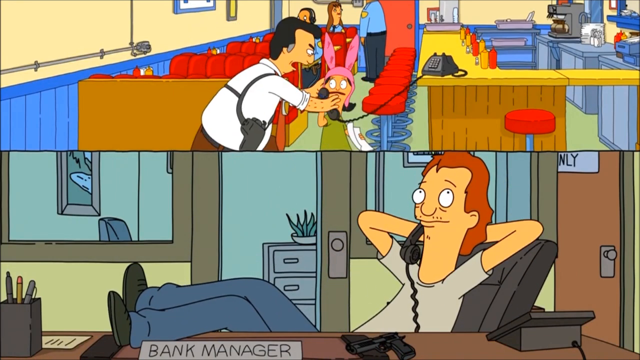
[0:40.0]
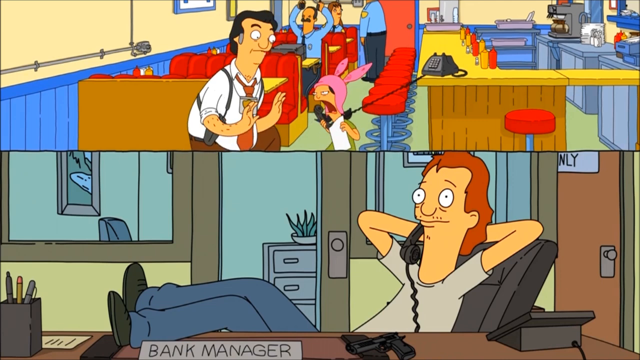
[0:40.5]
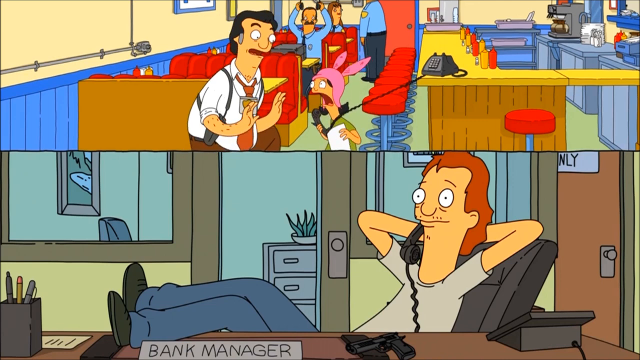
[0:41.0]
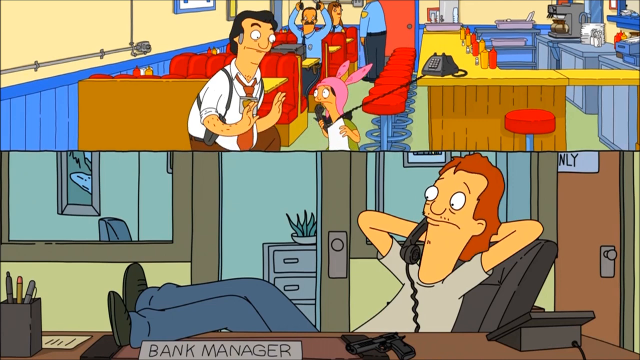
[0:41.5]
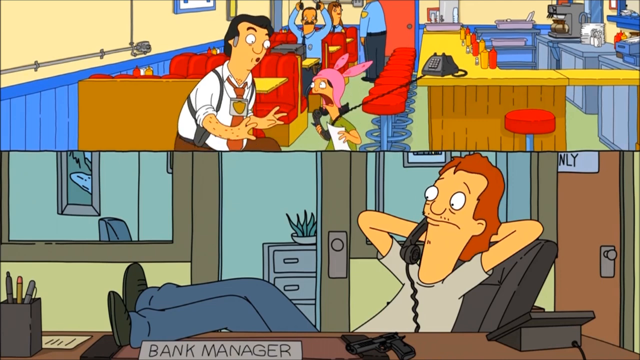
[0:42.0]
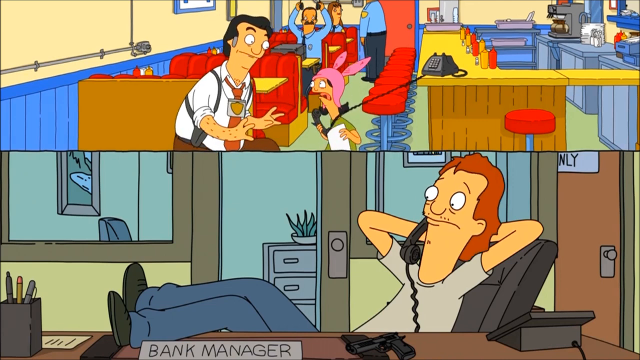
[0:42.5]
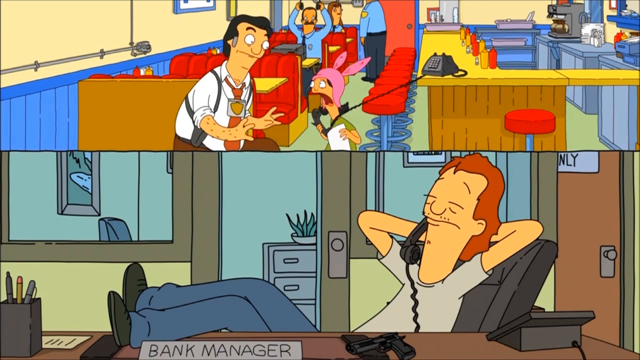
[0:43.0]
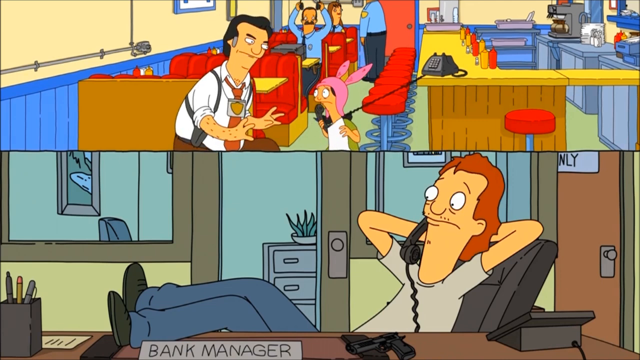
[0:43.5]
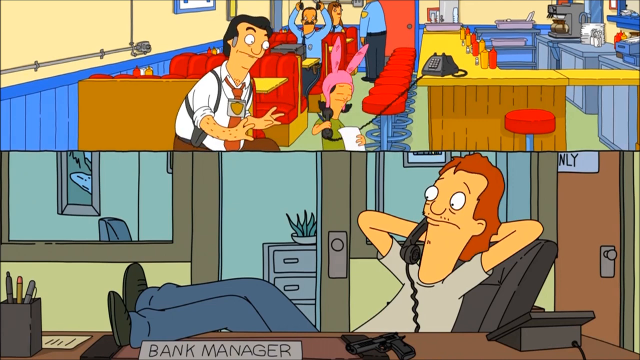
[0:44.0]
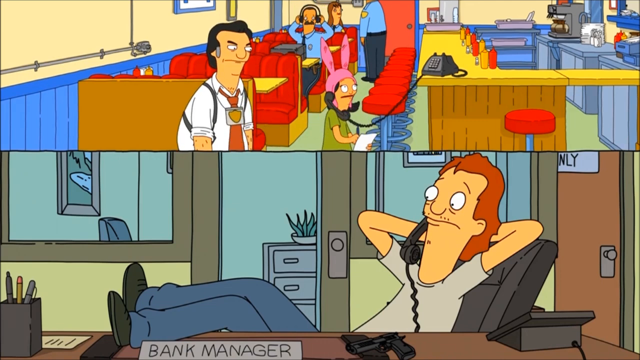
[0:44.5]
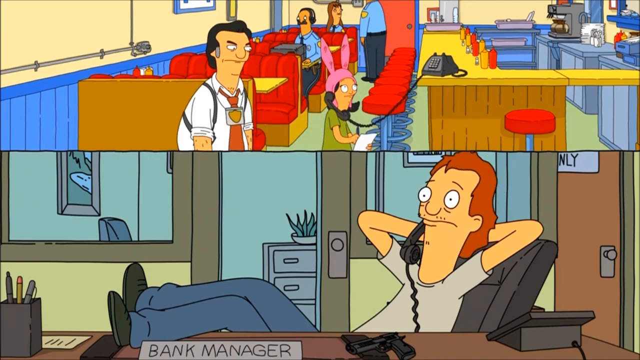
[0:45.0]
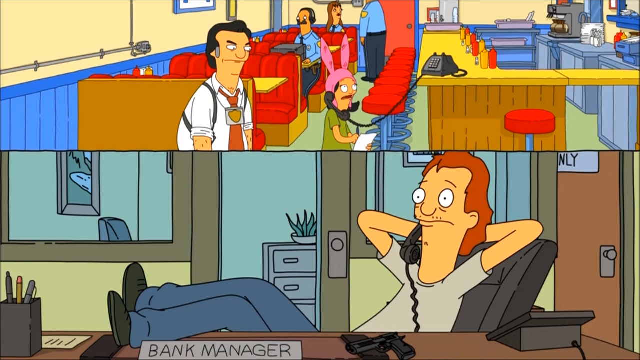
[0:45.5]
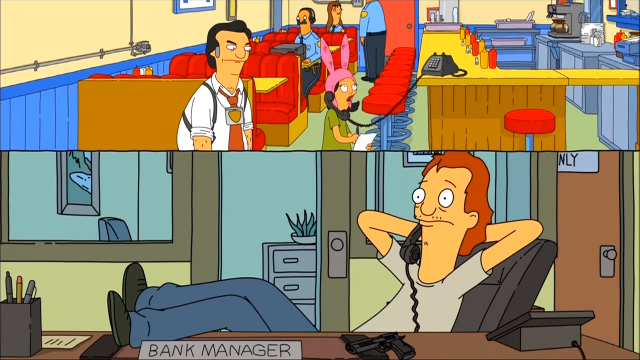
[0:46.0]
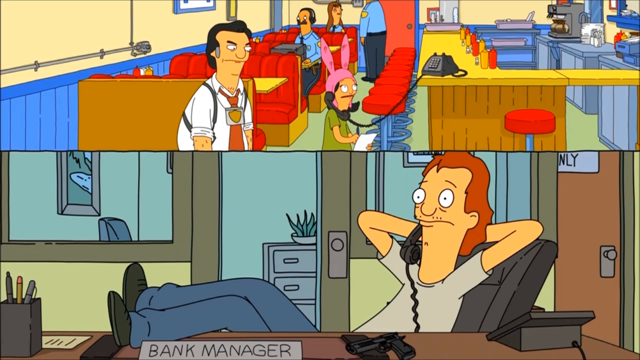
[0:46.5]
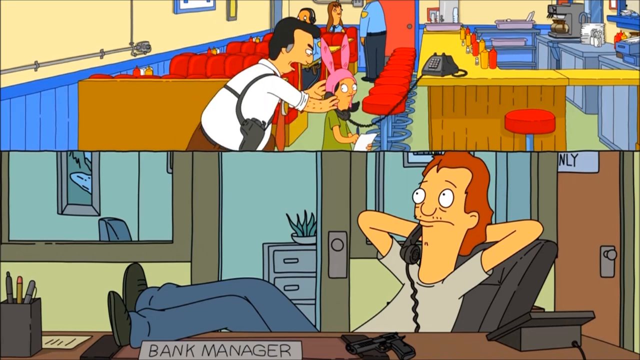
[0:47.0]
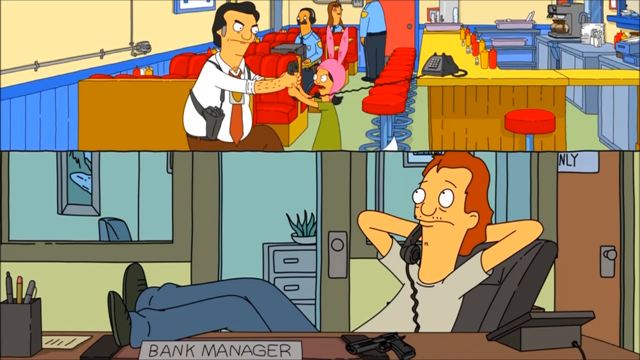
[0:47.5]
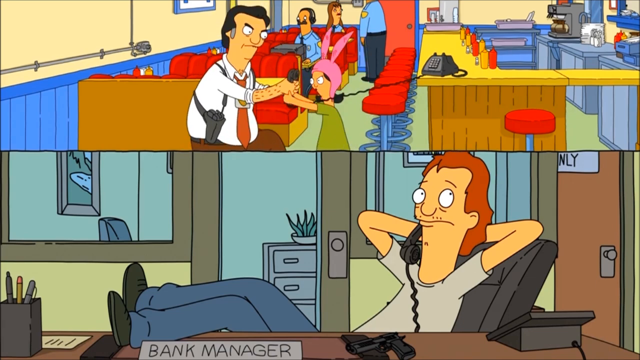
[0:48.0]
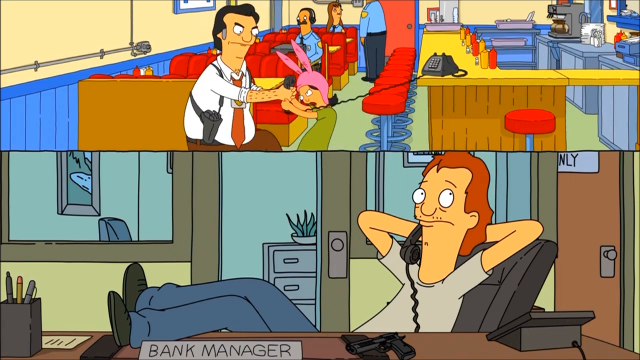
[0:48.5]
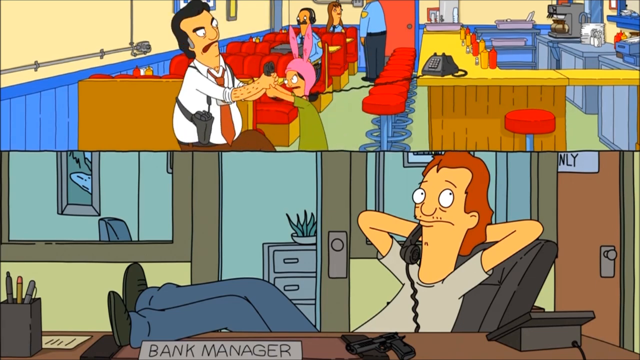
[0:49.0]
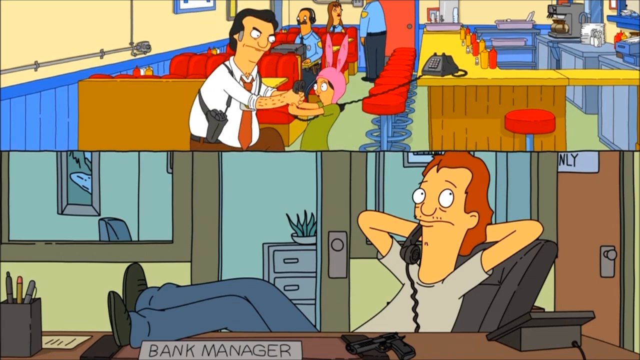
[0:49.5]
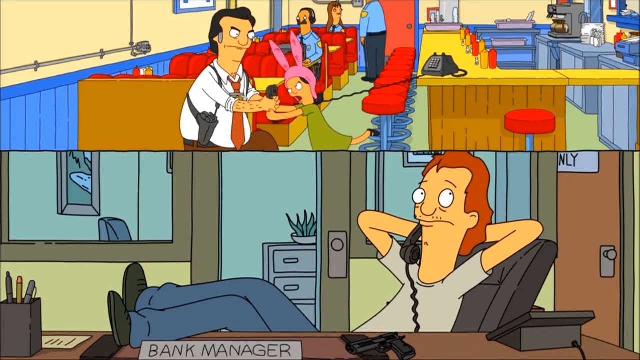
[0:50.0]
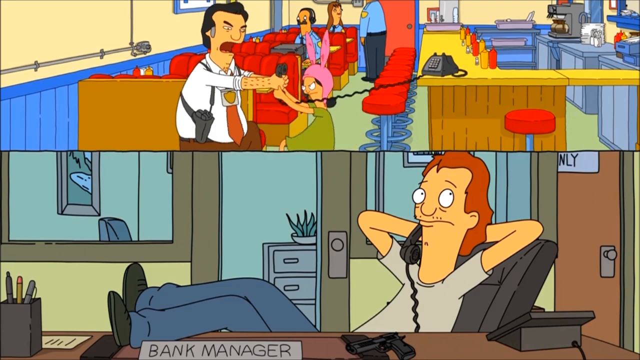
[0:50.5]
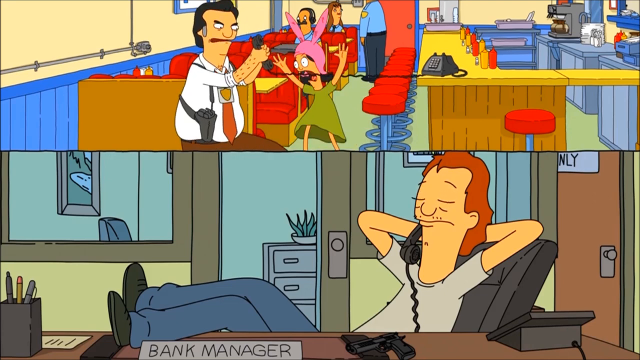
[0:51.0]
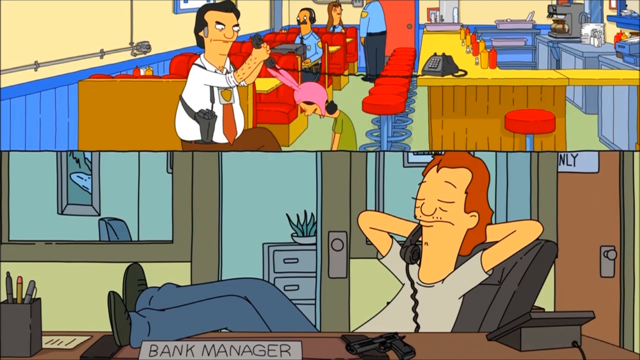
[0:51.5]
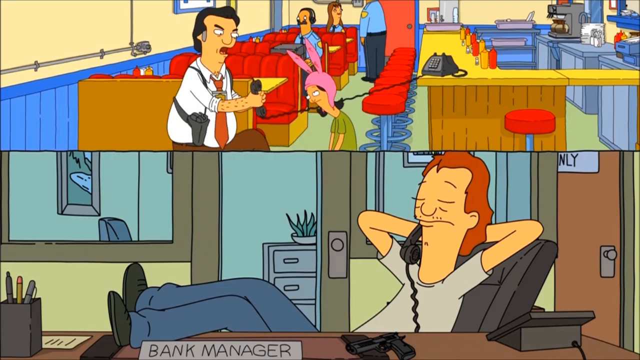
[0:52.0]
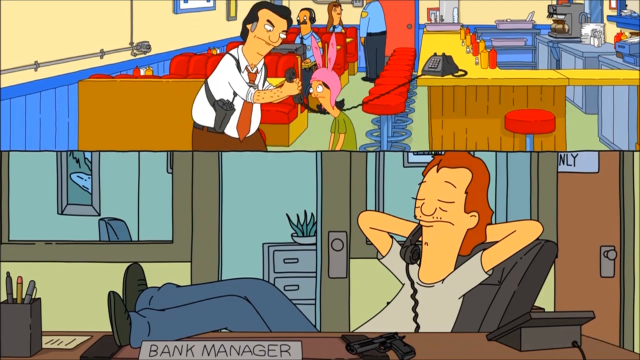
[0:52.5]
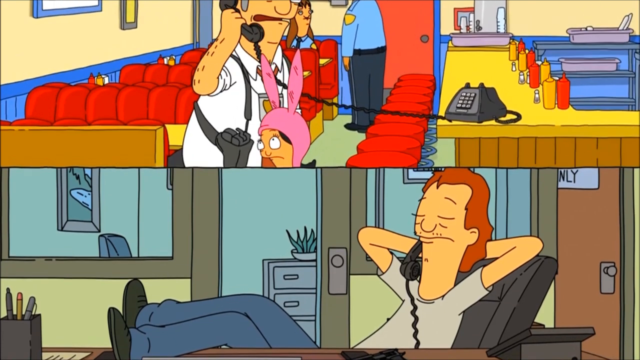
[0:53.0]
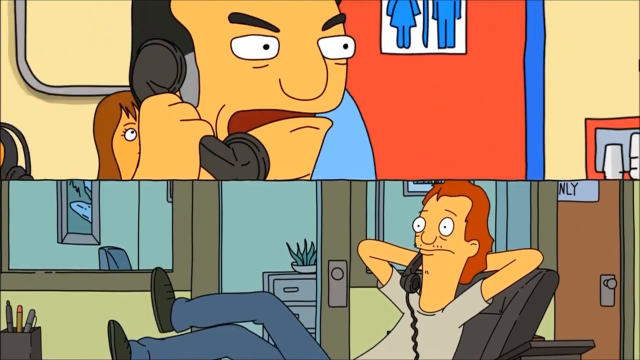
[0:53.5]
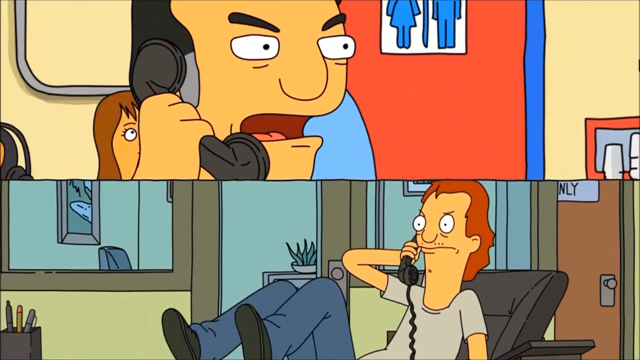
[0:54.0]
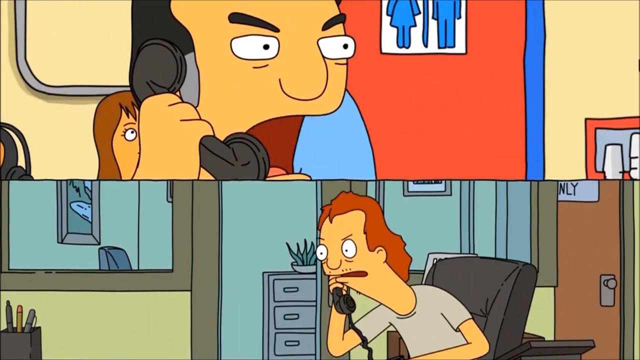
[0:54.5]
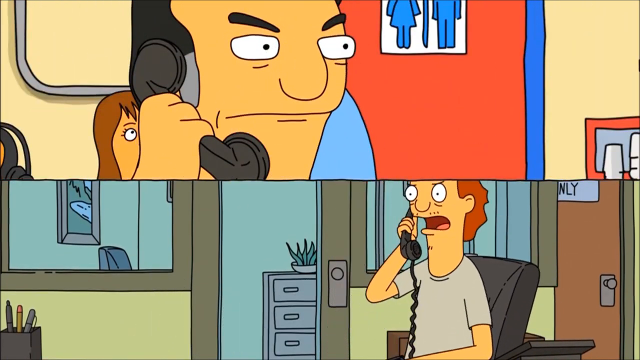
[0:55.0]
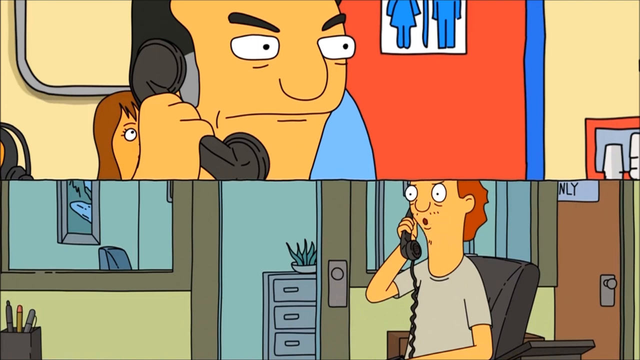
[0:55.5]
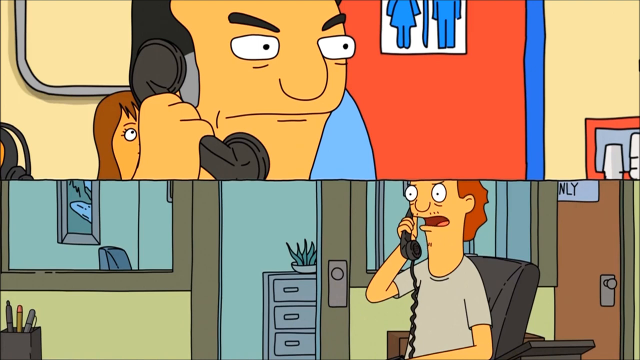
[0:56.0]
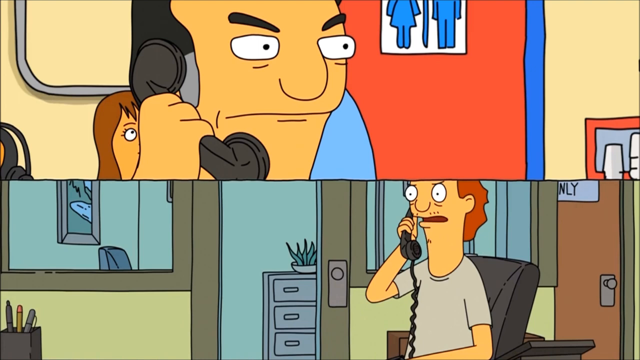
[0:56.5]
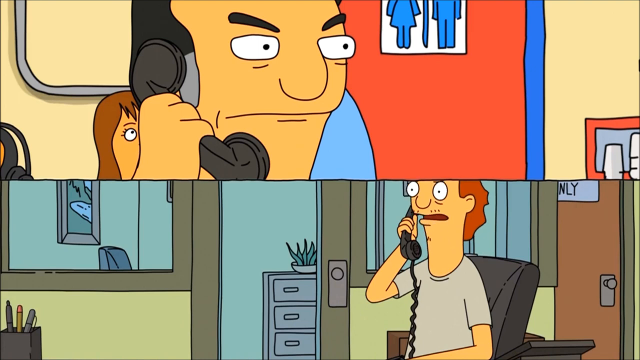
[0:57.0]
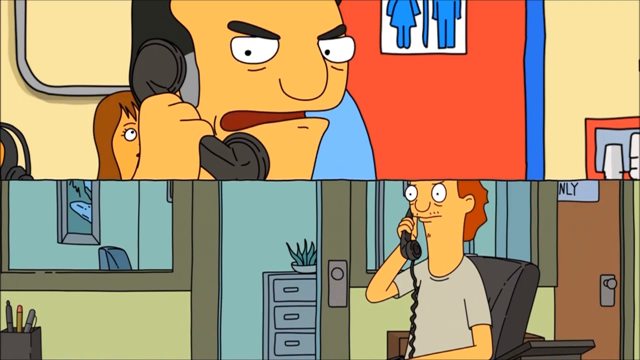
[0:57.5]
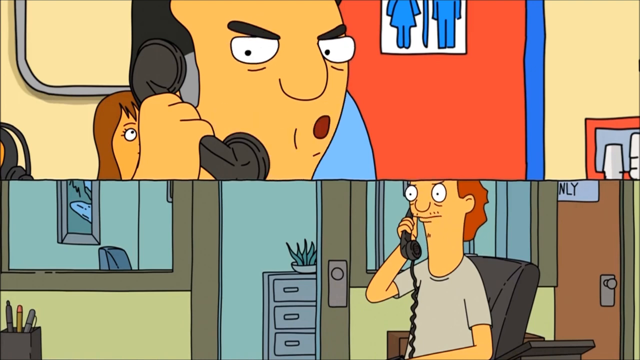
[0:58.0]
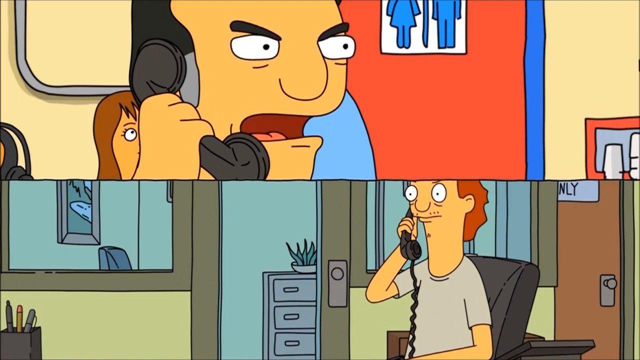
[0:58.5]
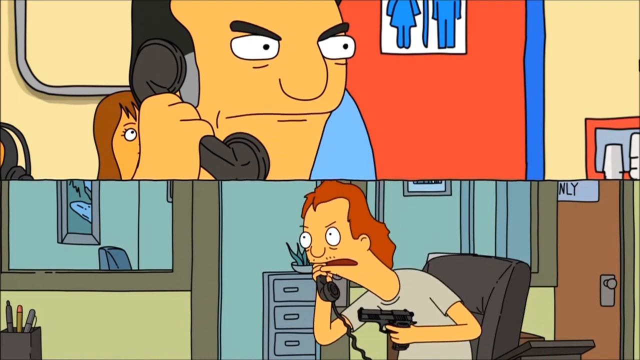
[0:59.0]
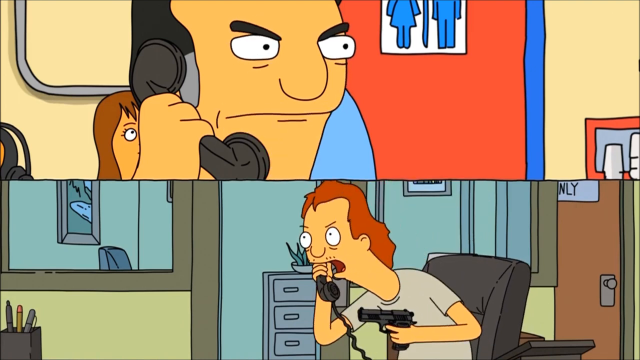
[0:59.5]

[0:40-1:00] Below the robber there is a sign that reads "bank manager", suggesting he is at a bank and probably robbing it. While he lounges in the chair, the girl fights the detective, kicking him in protest as he tries to take the phone from her. She keeps resisting, but he eventually gets the phone and talks to the robber himself. The robber looks very flustered and argues with him; both of their eyes are very wide, their eyebrows look very angry, and they are yelling more aggressively than before.